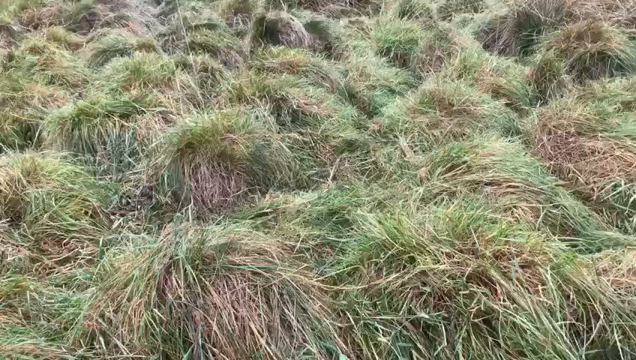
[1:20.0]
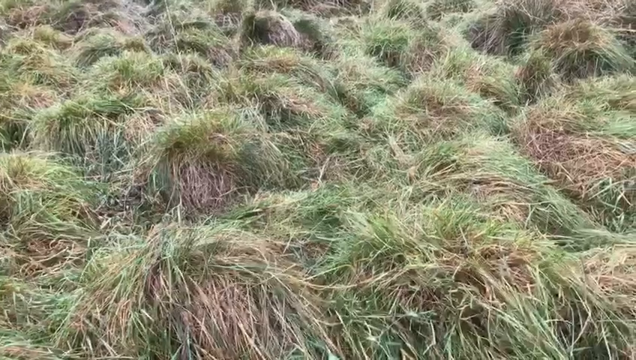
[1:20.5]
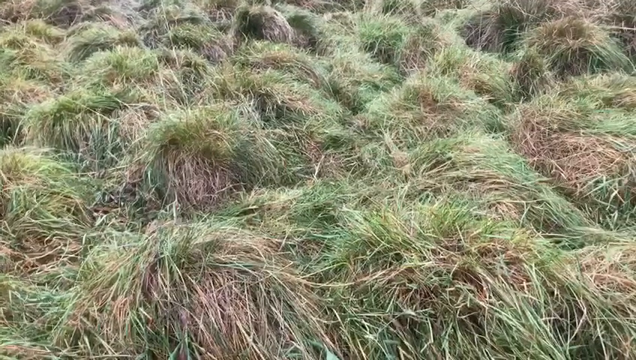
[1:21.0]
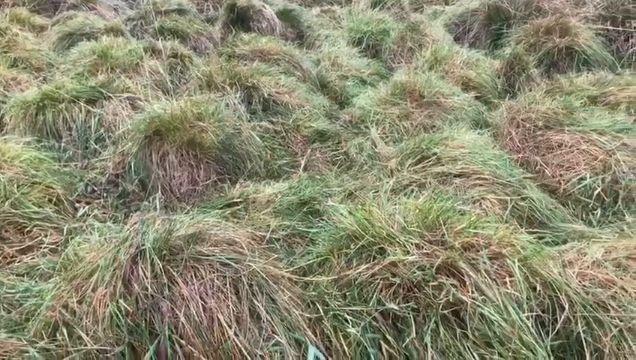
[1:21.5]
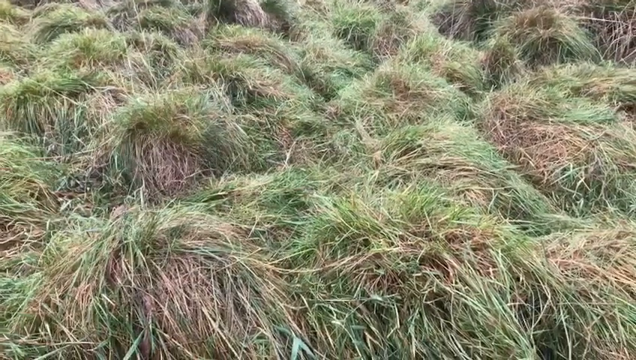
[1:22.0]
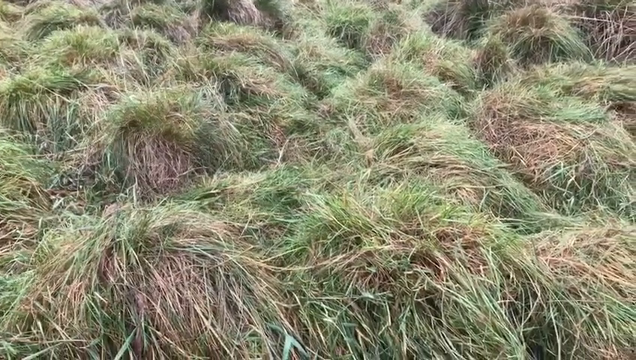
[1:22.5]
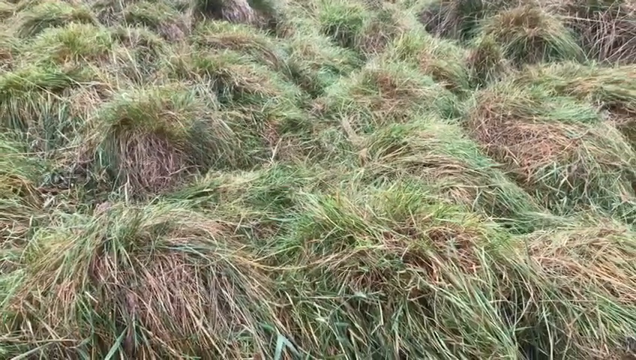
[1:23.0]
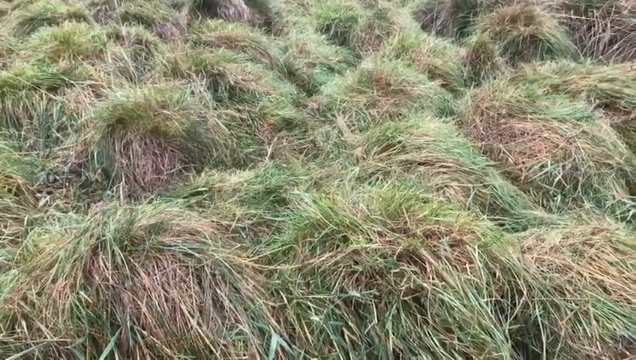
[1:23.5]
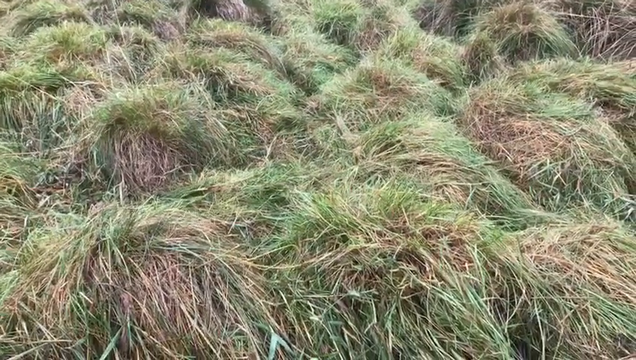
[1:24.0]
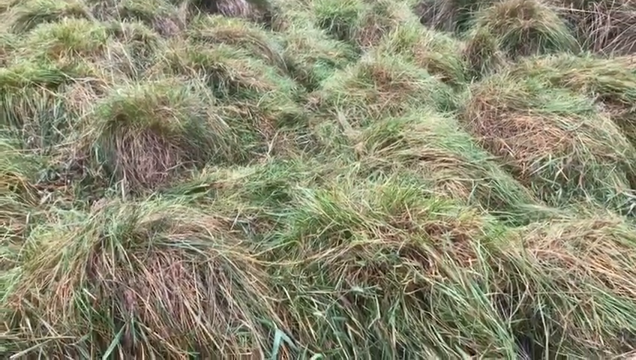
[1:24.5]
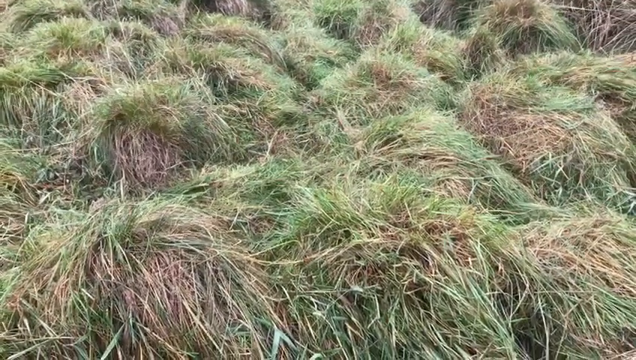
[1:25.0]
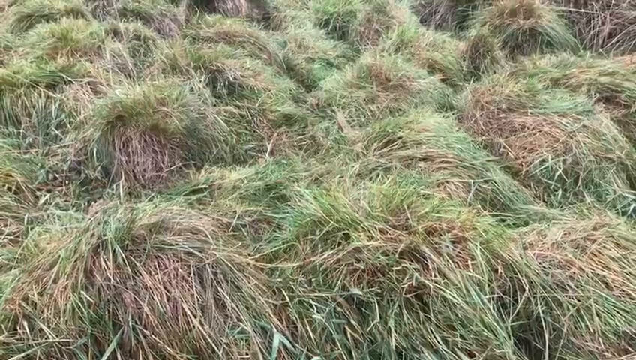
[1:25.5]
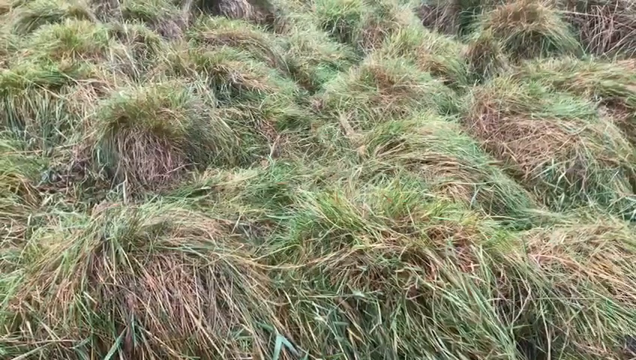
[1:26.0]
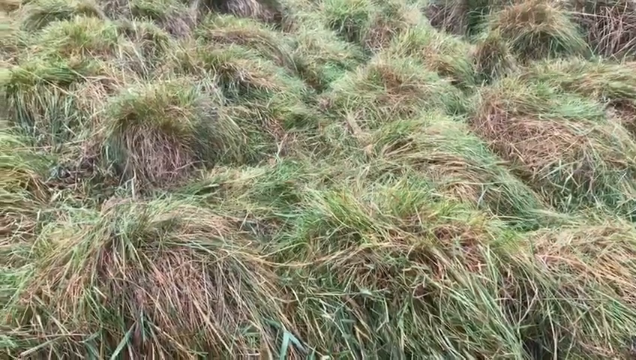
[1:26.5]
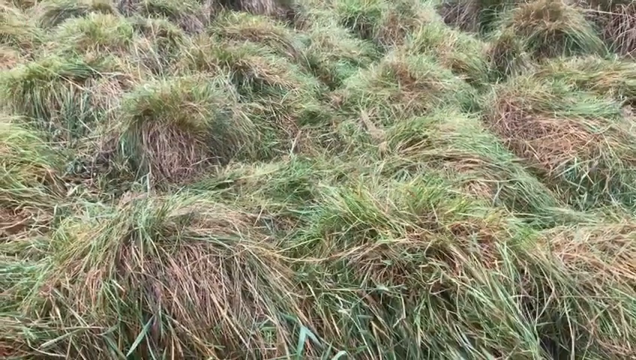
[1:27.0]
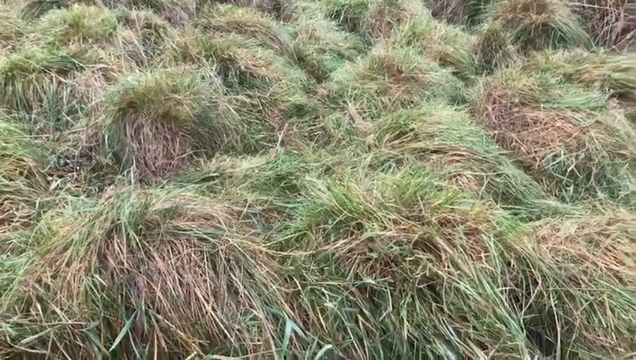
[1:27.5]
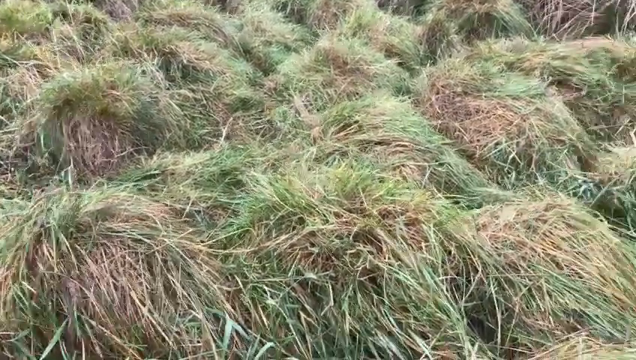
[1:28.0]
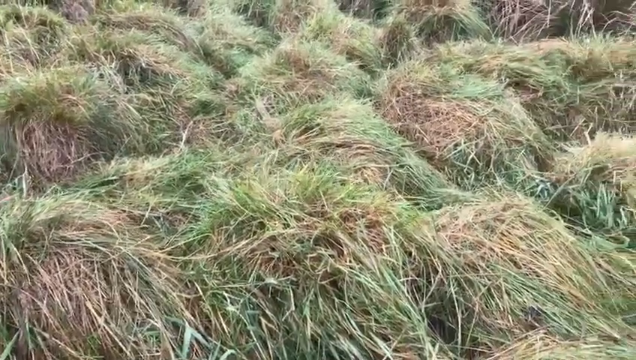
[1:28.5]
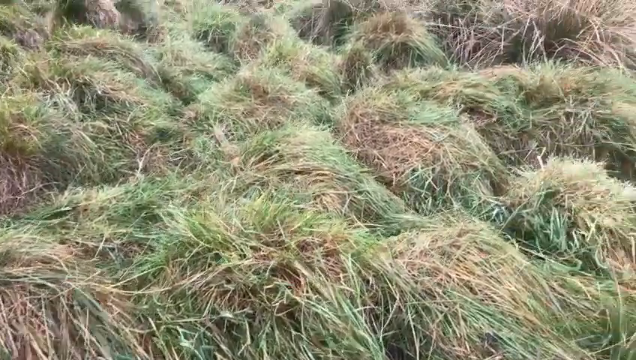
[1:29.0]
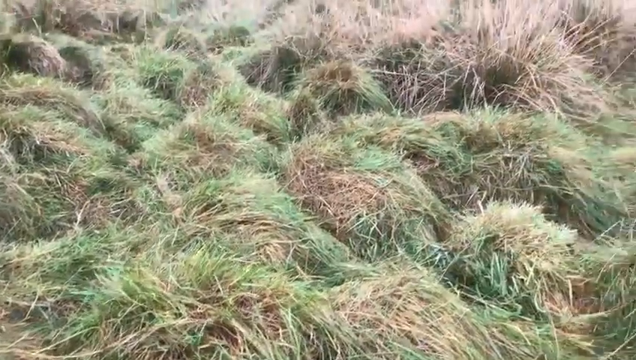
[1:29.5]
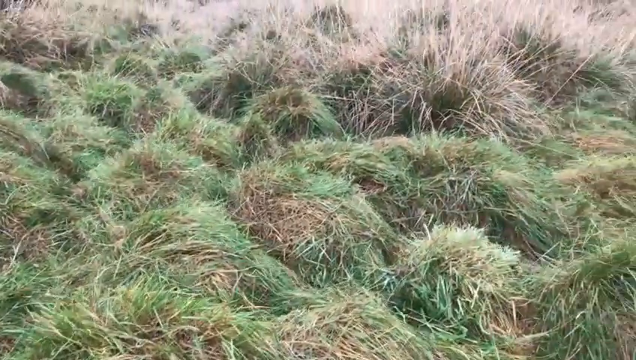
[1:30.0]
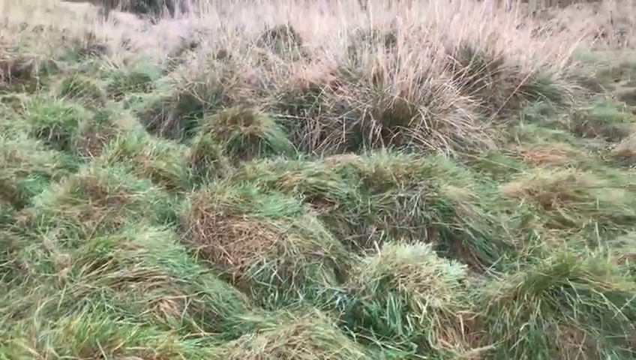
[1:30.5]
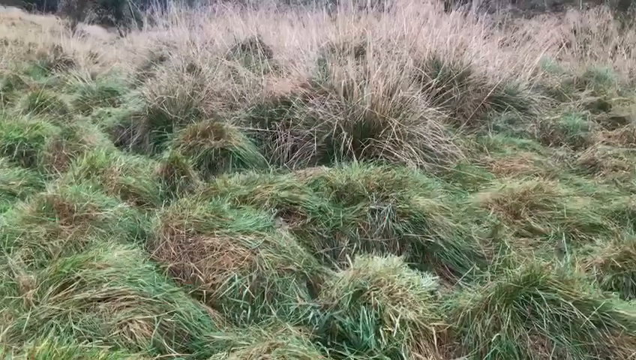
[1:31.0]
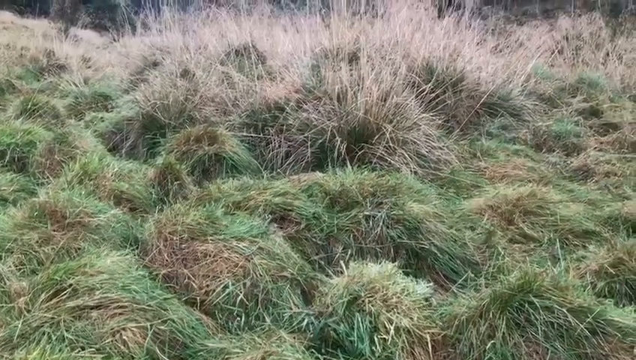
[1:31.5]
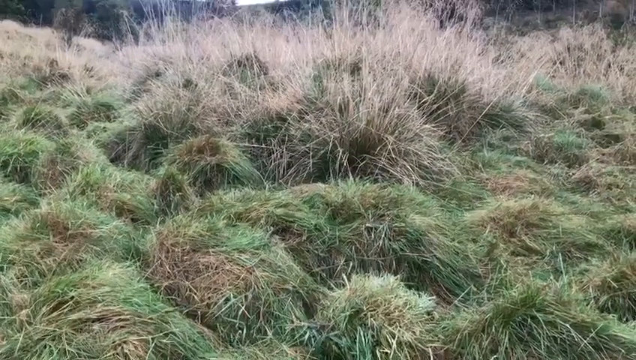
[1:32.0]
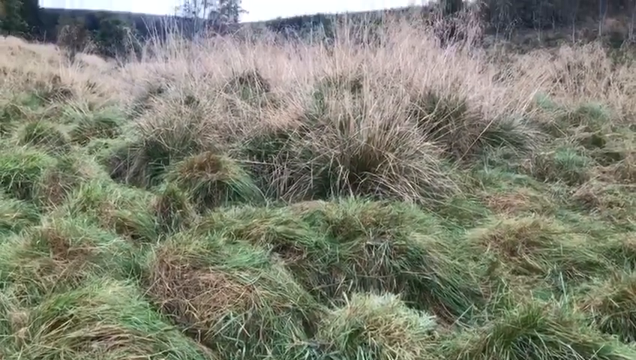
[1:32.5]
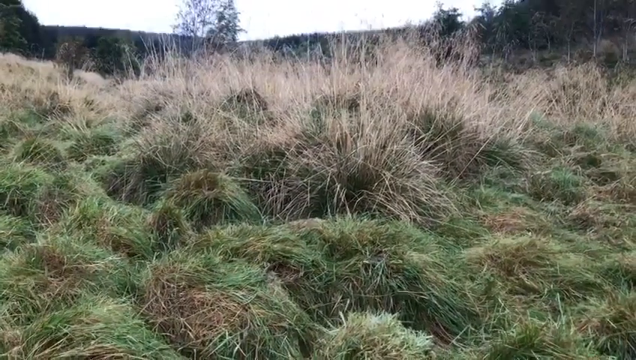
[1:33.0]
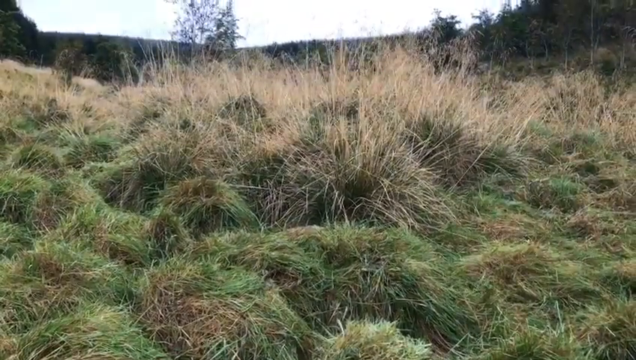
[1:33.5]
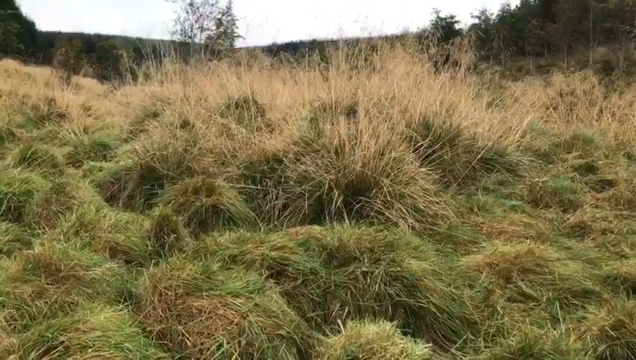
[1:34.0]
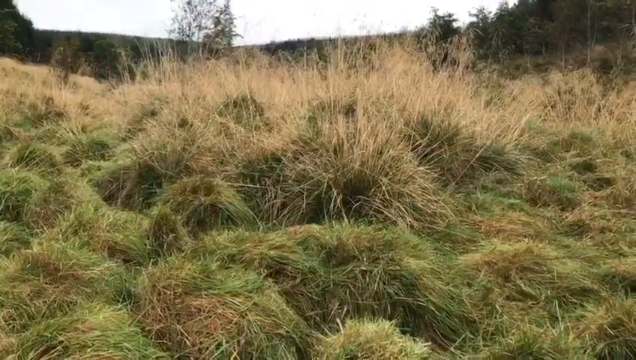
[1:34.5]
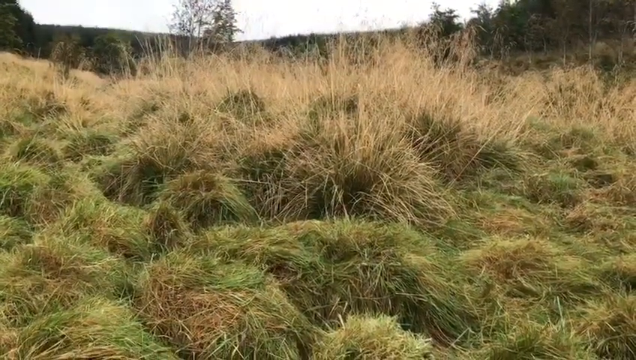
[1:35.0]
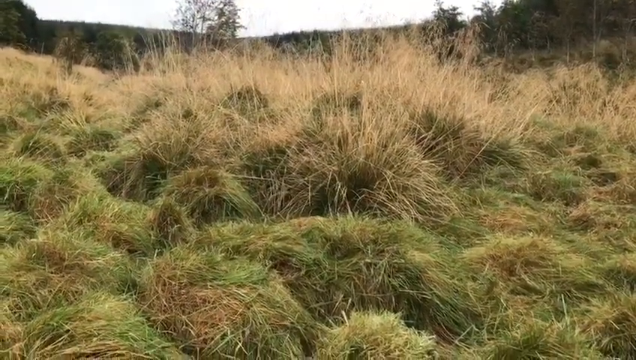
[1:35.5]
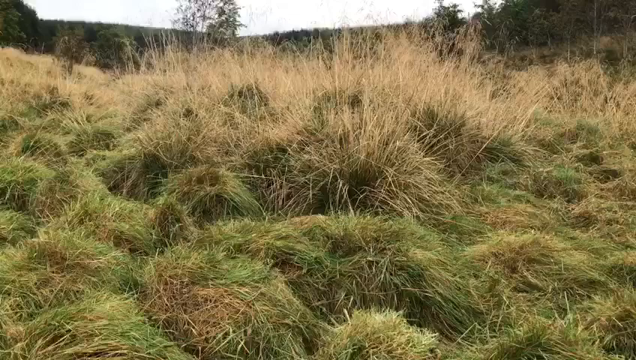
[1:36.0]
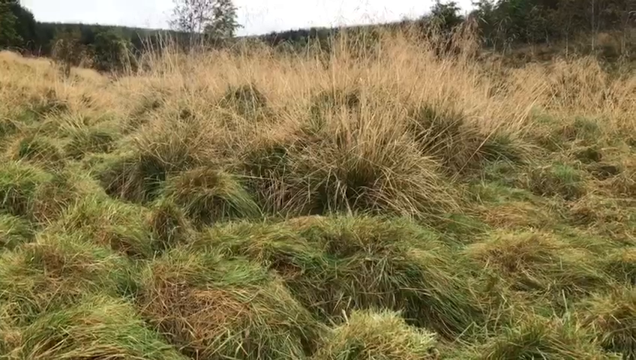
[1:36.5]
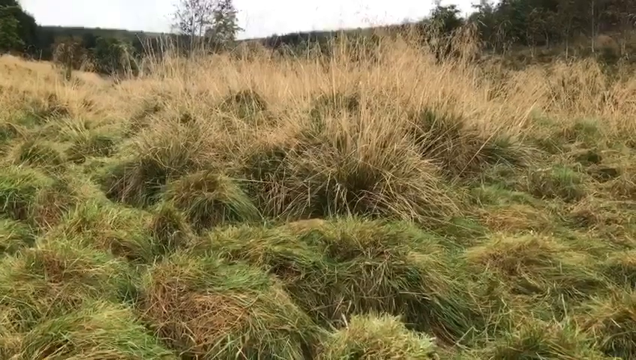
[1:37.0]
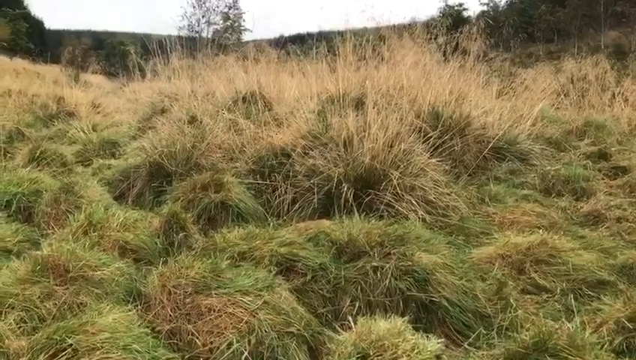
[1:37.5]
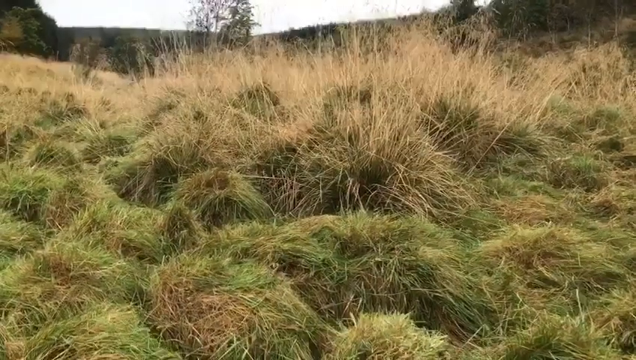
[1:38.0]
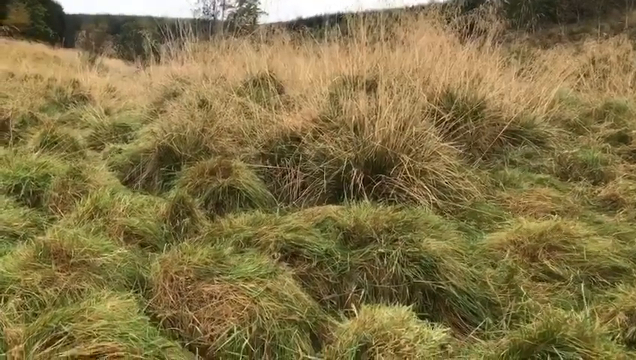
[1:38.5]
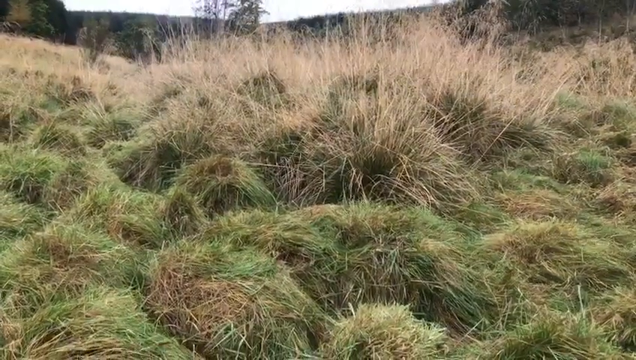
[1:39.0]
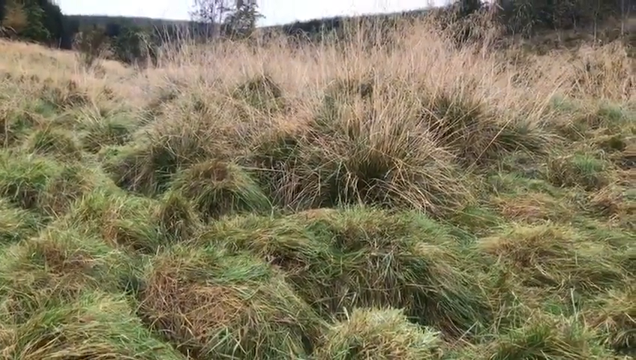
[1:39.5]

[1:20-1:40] The camera continues with views angled close to the ground, giving a sharp, clear image of tufts of pasture grass. As the view swings upward, the color shifts slightly from the green tufts on the lower hillside to taller, more amber-colored wild pasture grasses. Panning further upward, the camera shows a sharp demarcation between the hillside pasture and the skyline, with a steep hillside in the far distance against a white overcast sky. The camera is in constant slow motion, as though handheld, and moves from close-up views of the grass tufts to a distant view looking up the fairly steep hillside.